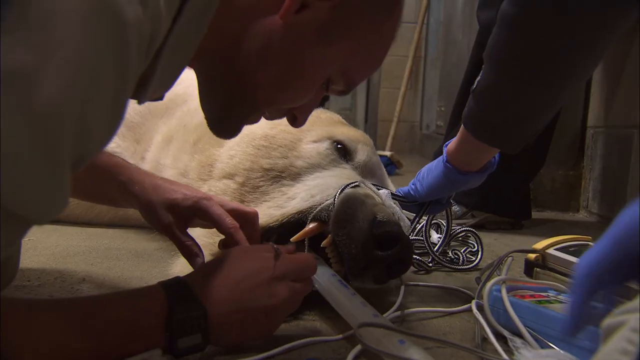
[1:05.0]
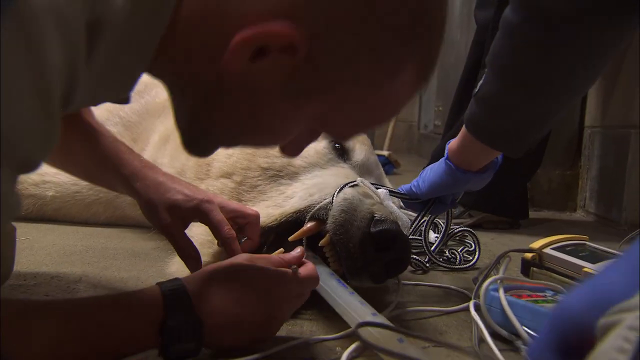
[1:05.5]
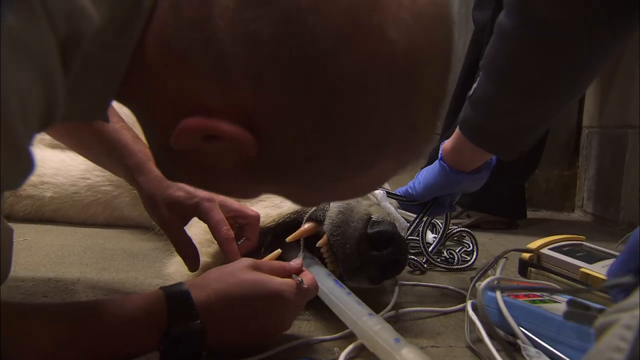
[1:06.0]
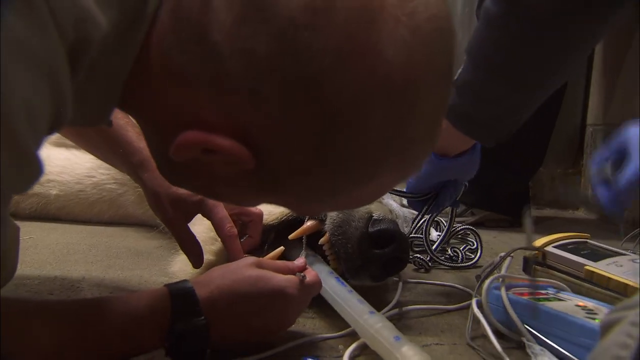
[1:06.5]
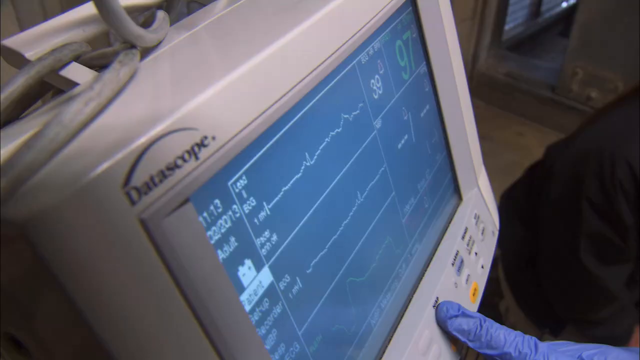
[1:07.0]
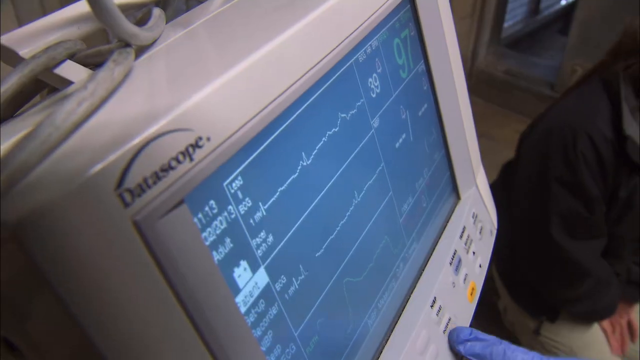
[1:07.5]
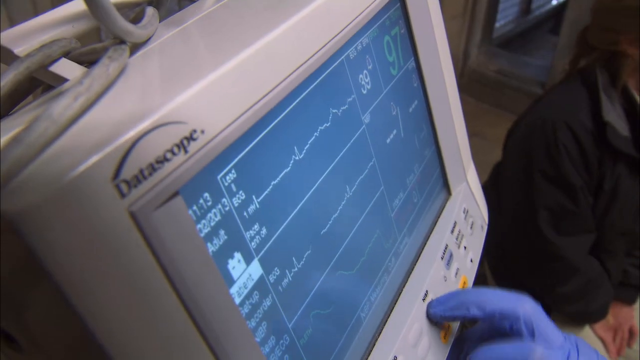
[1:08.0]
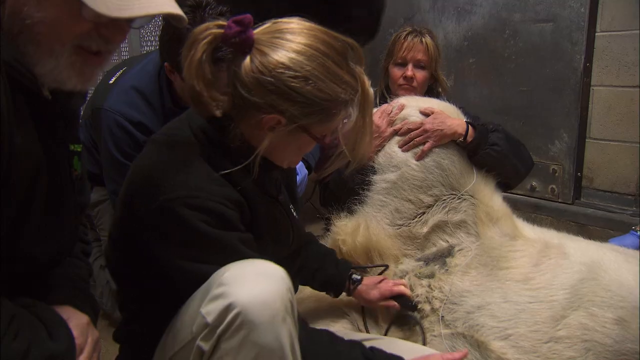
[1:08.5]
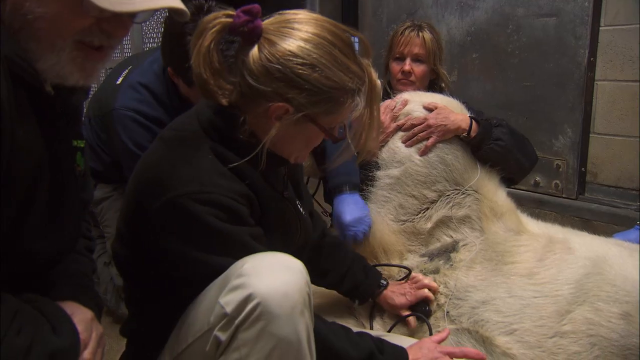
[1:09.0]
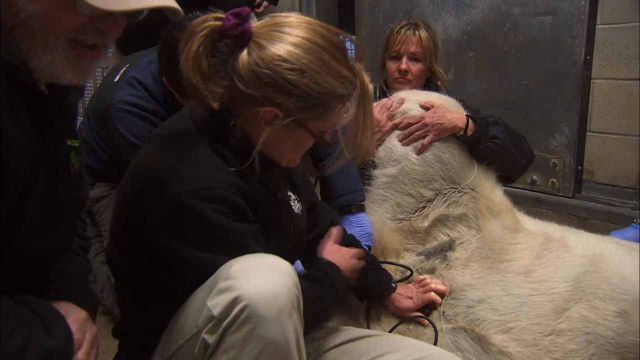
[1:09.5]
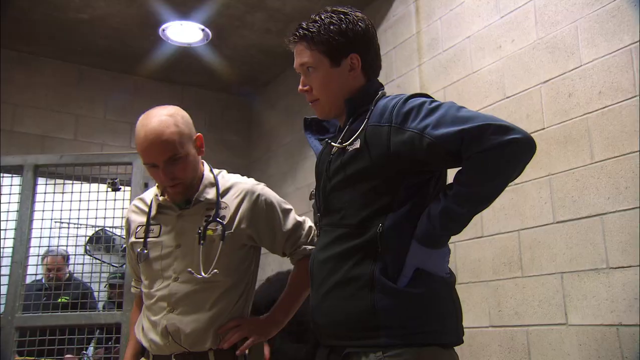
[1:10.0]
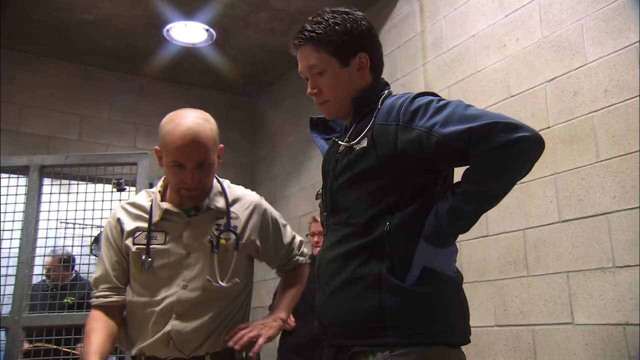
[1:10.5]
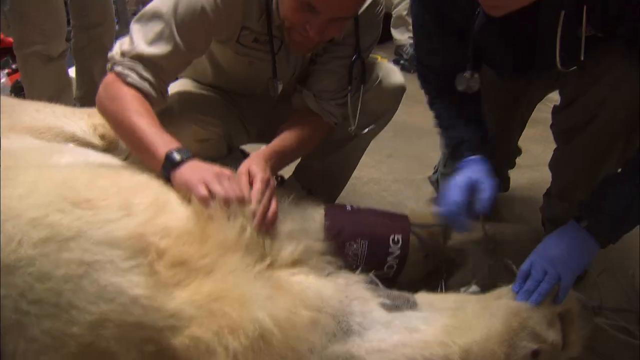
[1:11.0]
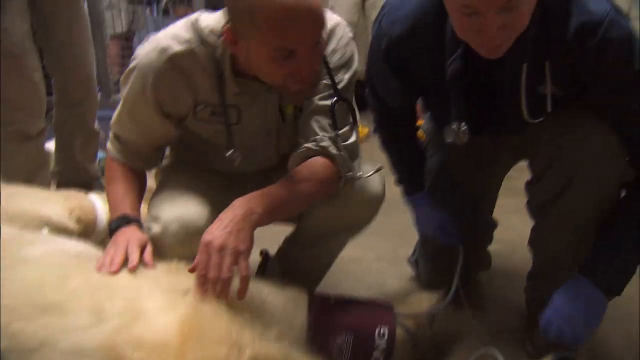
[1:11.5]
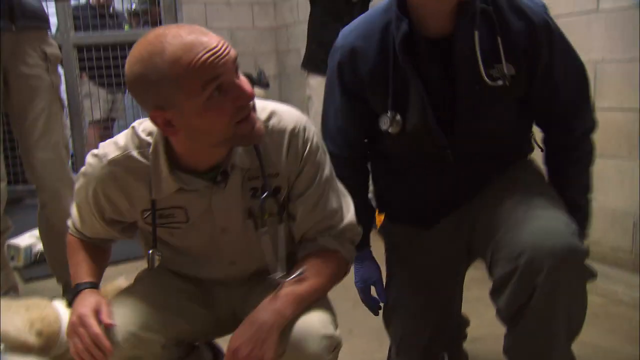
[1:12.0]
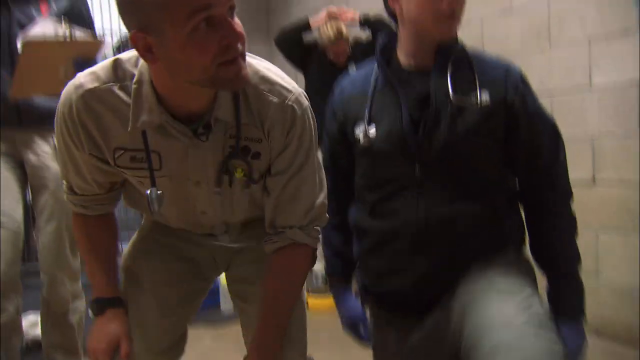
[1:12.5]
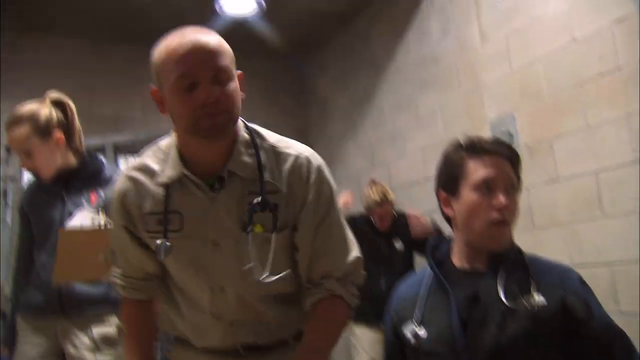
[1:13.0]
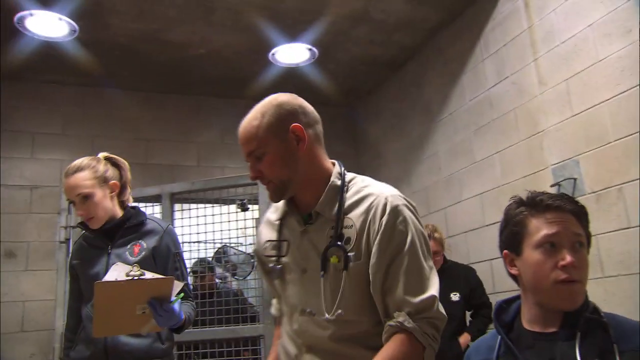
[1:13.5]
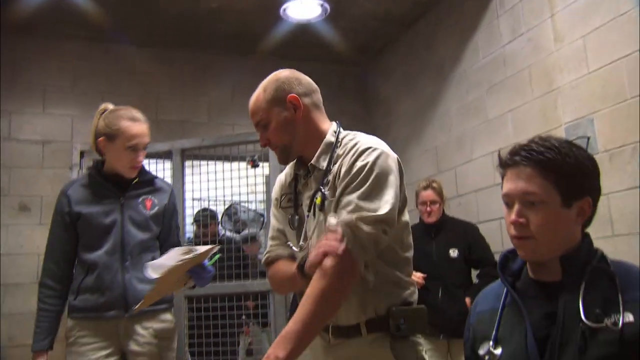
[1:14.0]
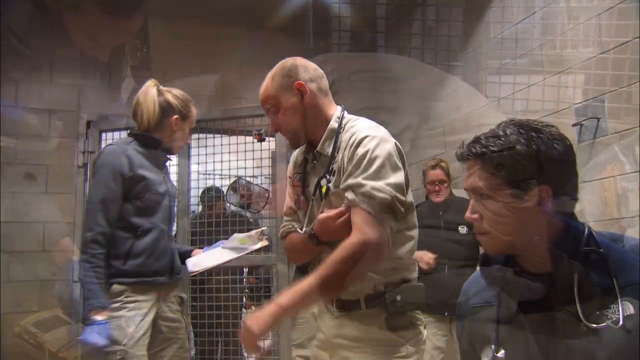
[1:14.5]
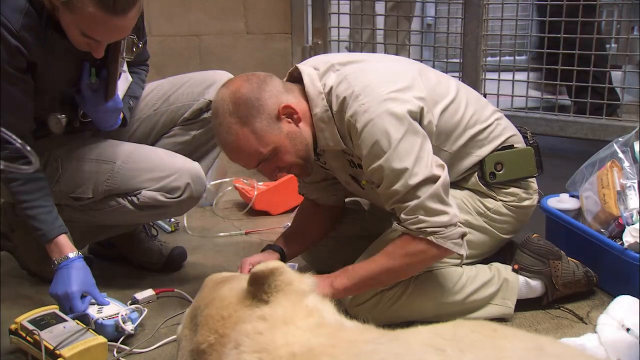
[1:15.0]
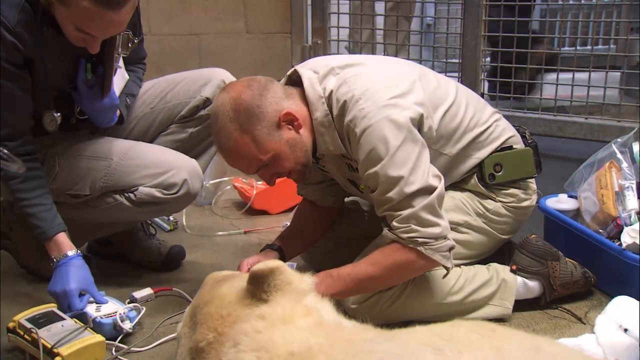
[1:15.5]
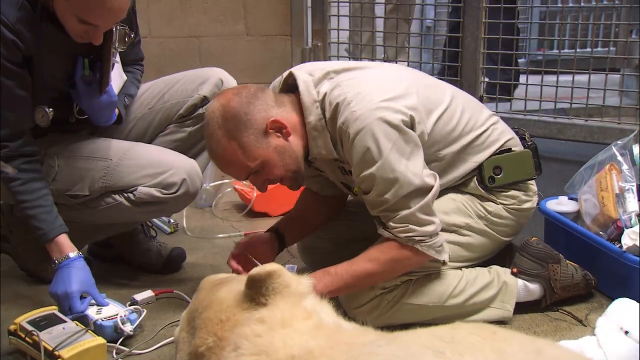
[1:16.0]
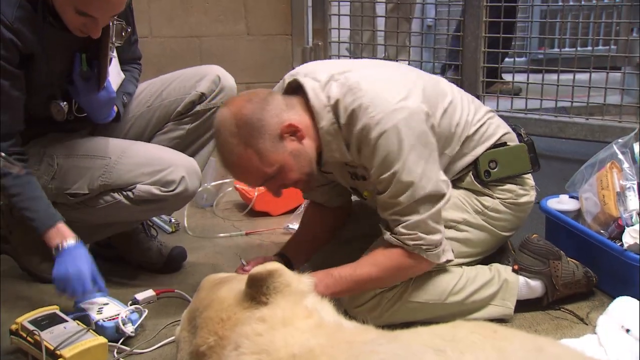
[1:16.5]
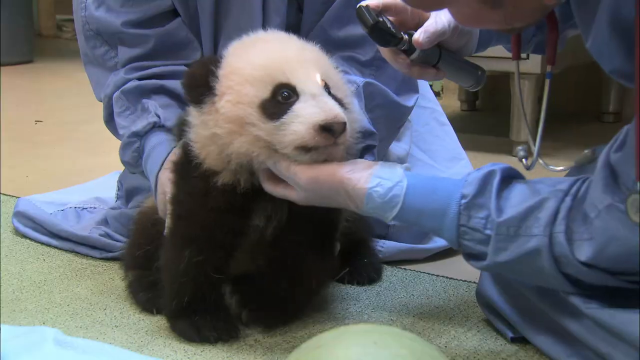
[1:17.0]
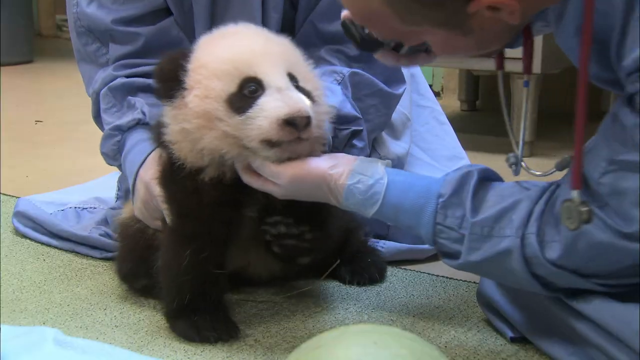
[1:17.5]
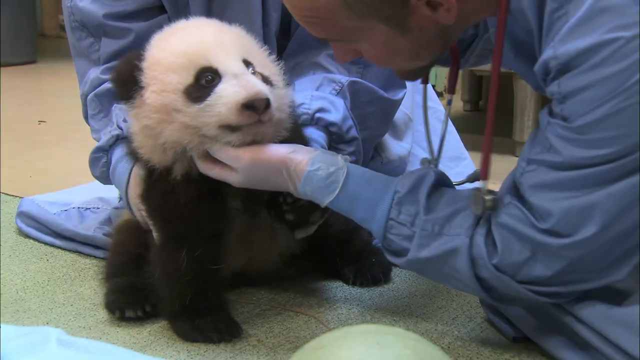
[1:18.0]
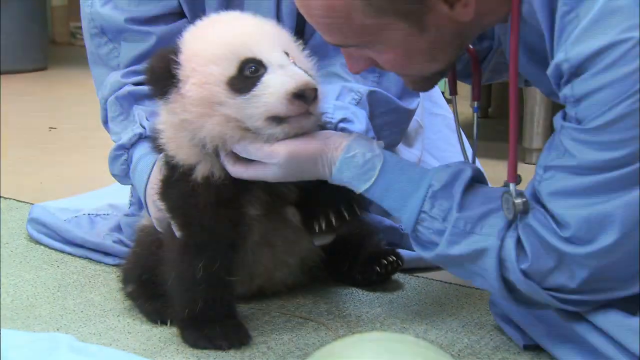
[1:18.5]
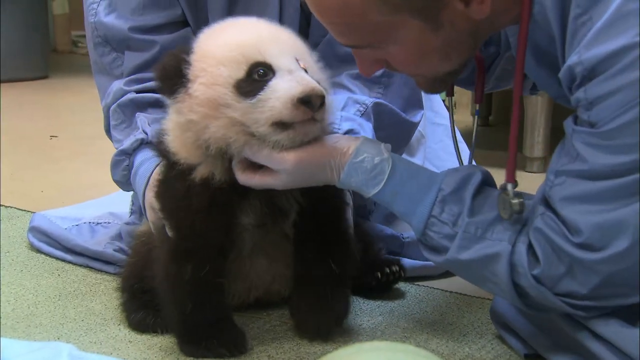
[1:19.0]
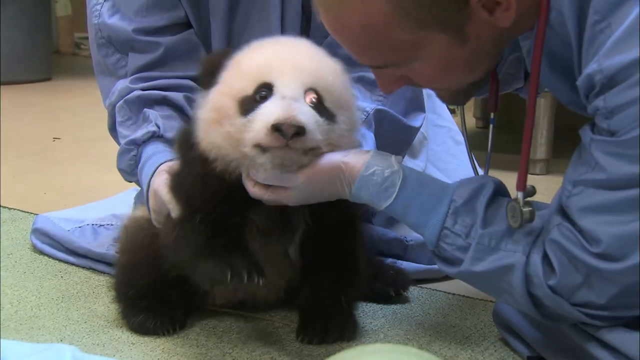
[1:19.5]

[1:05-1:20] The polar bear is on the ground at the zoo, kind of tied down. Some kind of medical imaging system is visible, and the team has stethoscopes. The main veterinarian and some assistants are all doing exams on the polar bear. The shot then changes to a small panda bear that looks in better shape. They rub its neck area, petting it in a friendly way, and appear to use lights to check its eyes.